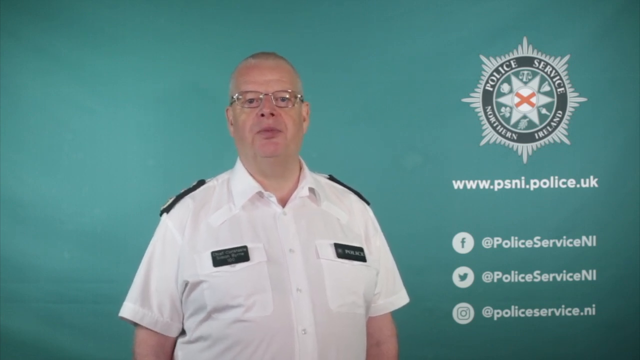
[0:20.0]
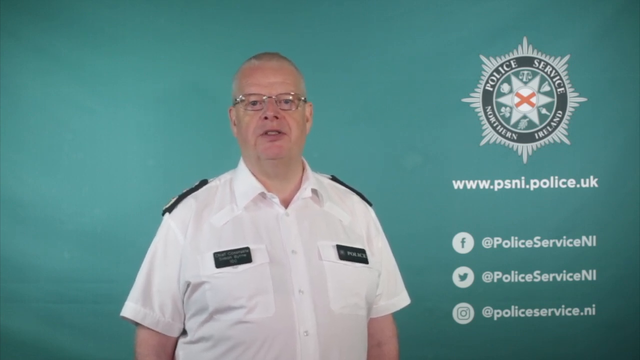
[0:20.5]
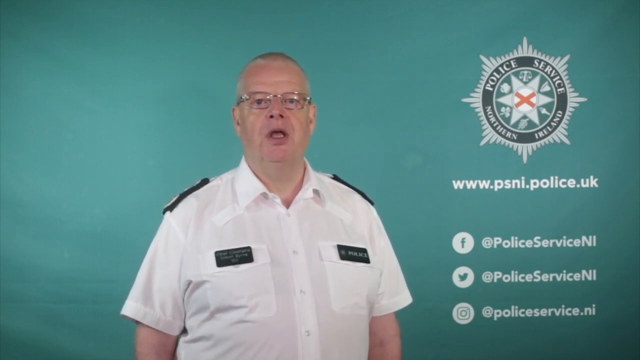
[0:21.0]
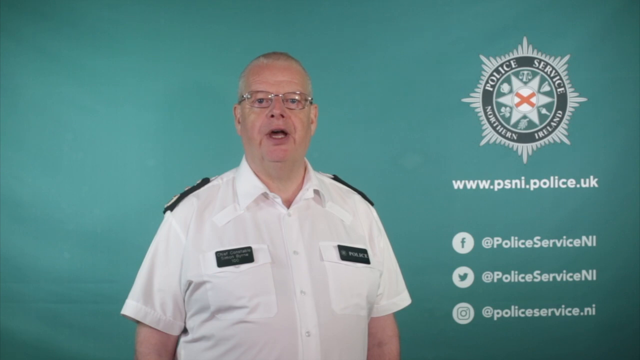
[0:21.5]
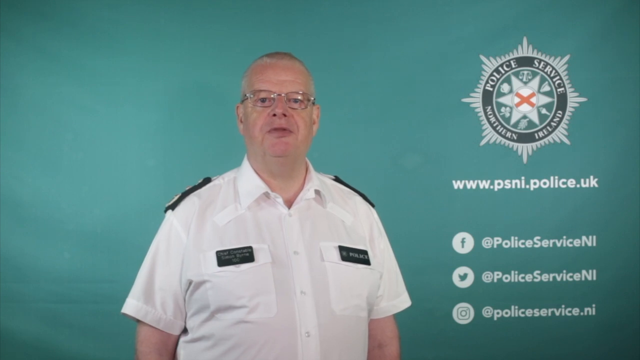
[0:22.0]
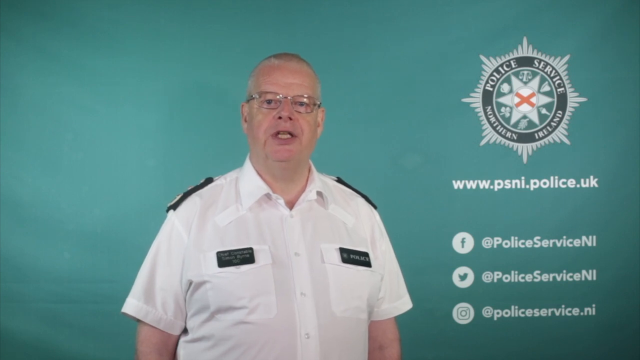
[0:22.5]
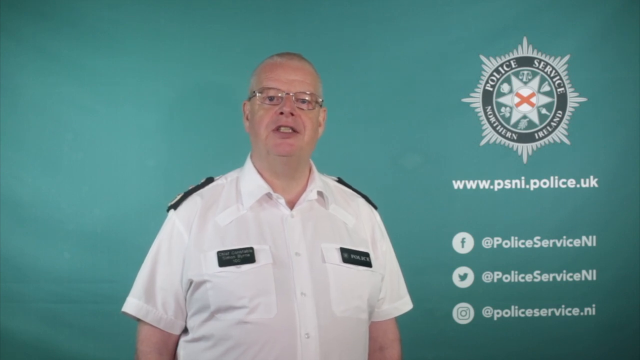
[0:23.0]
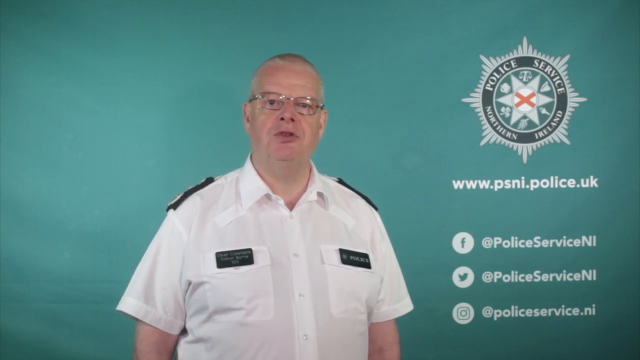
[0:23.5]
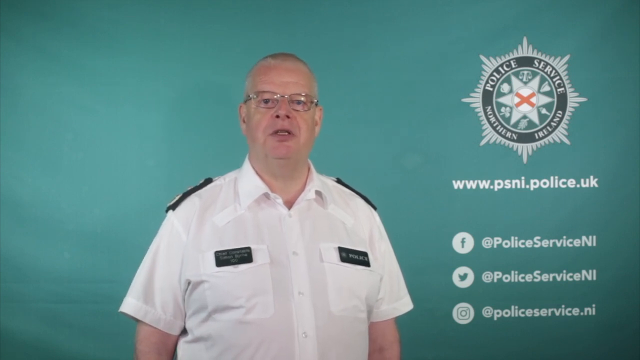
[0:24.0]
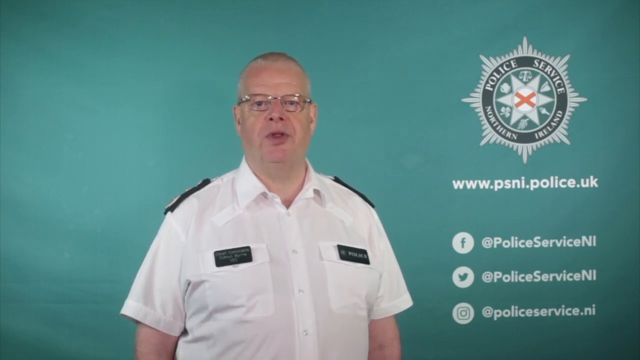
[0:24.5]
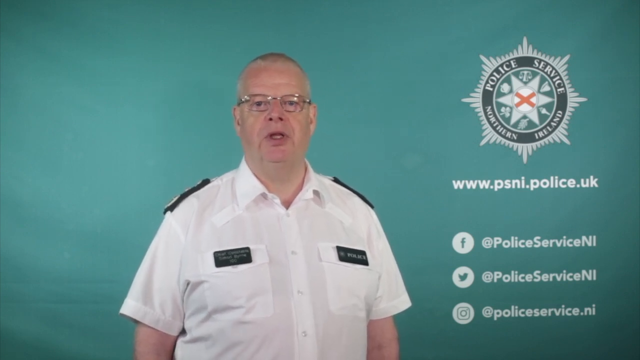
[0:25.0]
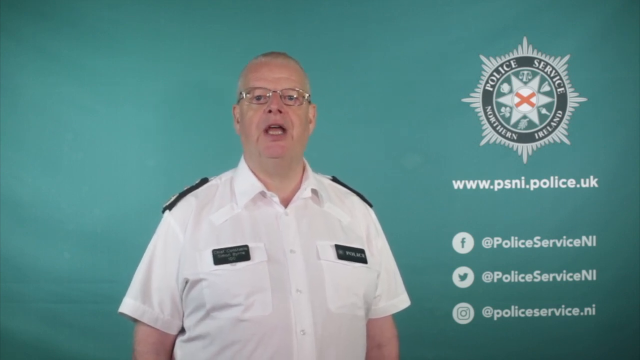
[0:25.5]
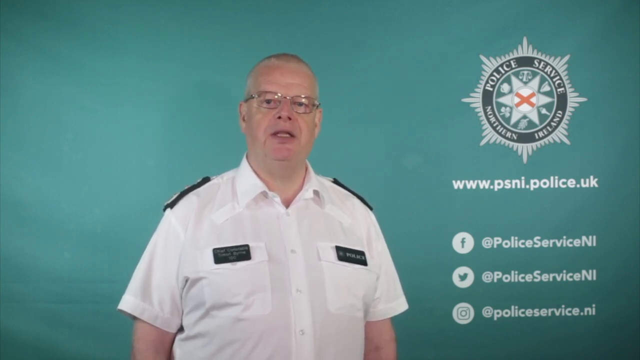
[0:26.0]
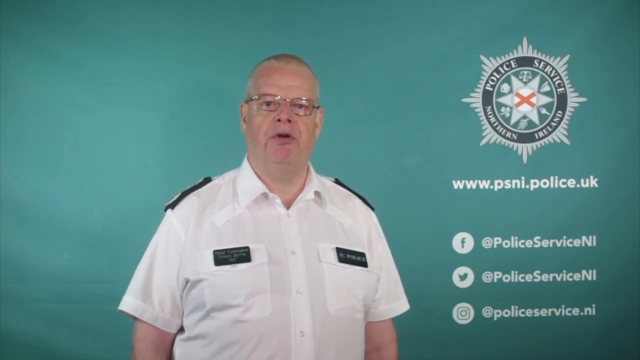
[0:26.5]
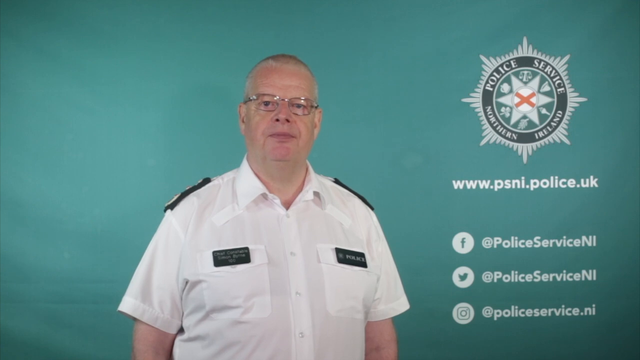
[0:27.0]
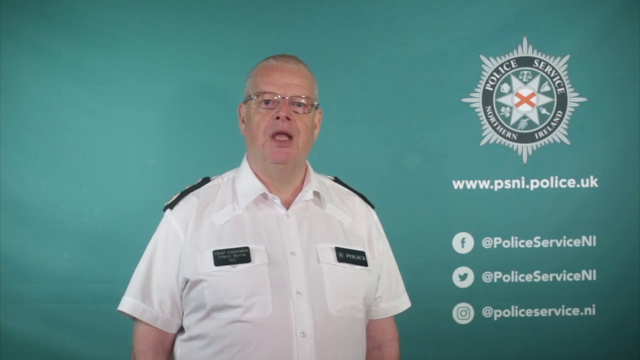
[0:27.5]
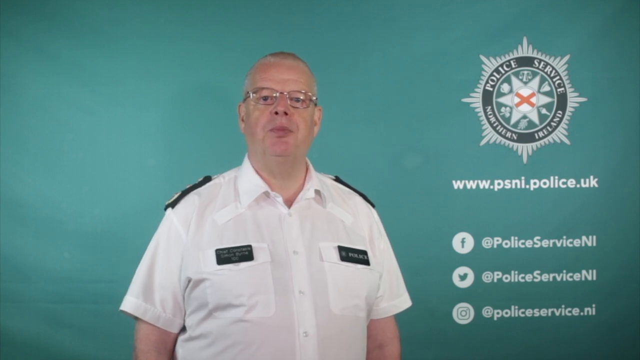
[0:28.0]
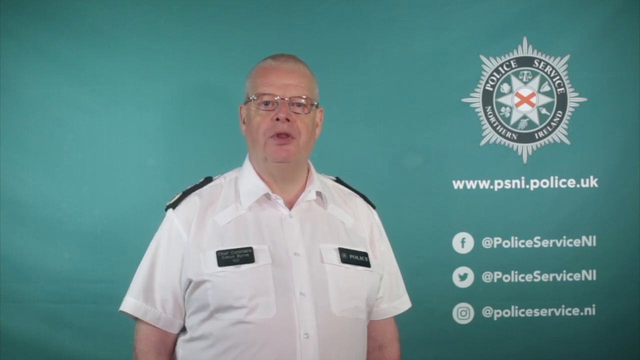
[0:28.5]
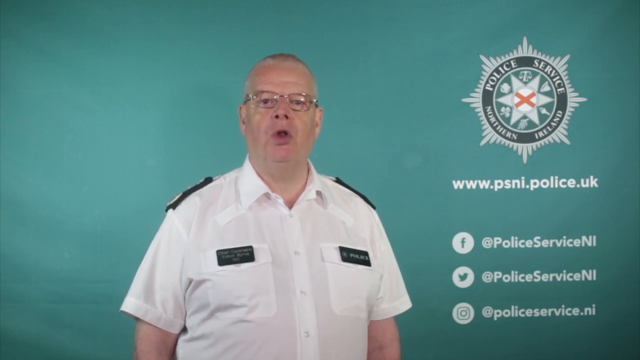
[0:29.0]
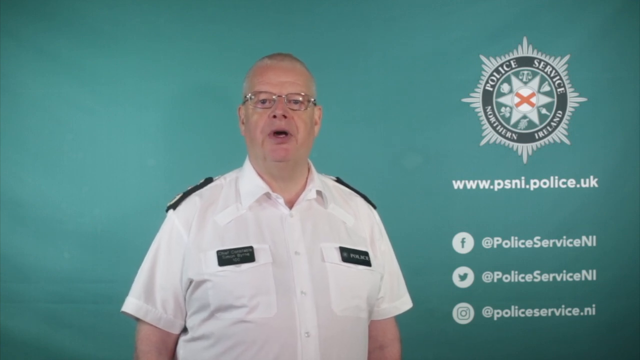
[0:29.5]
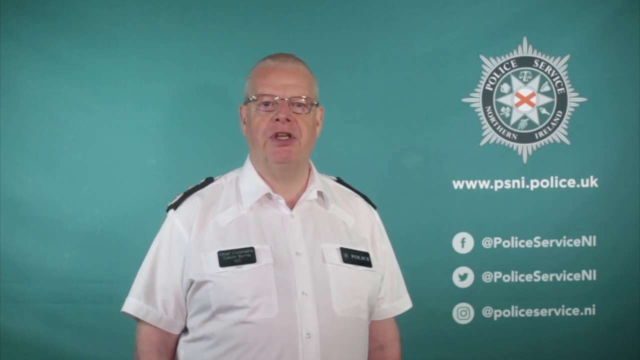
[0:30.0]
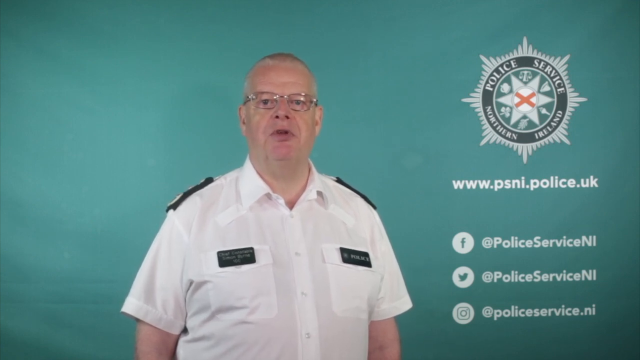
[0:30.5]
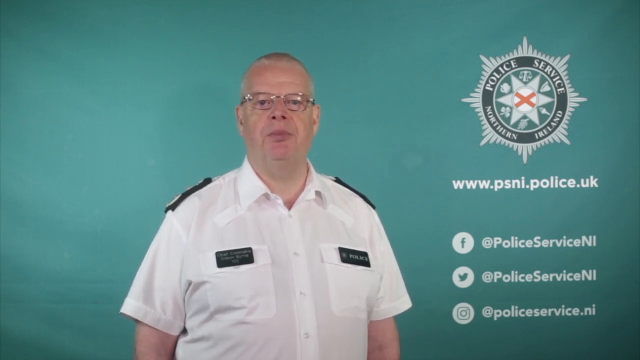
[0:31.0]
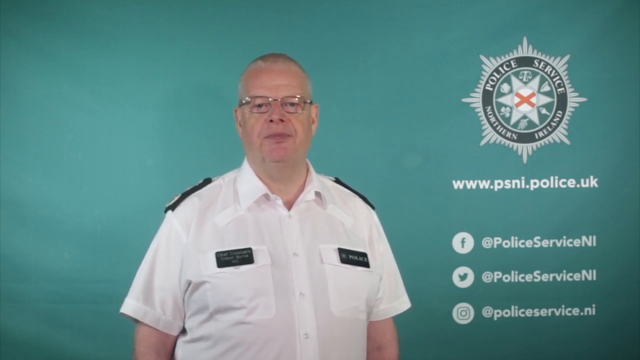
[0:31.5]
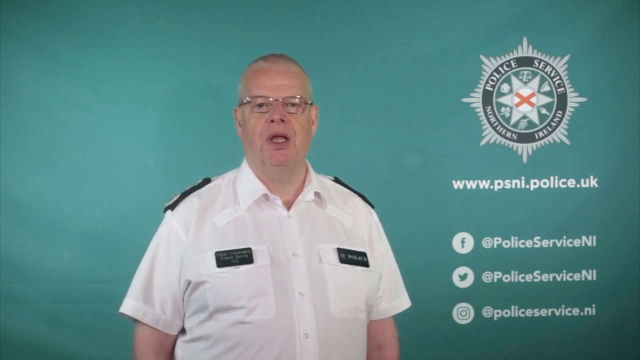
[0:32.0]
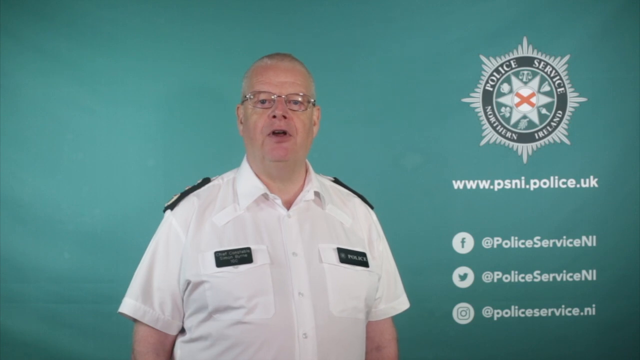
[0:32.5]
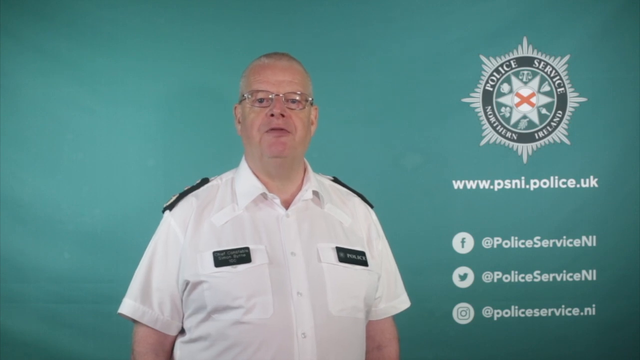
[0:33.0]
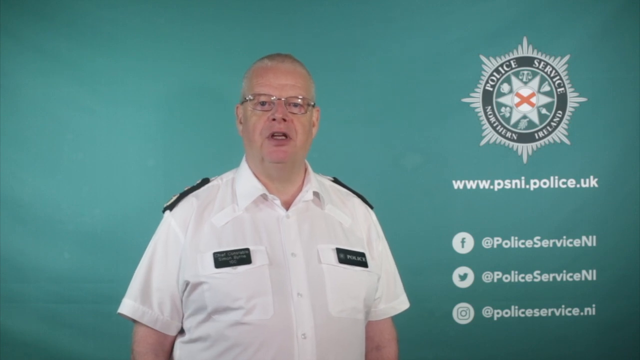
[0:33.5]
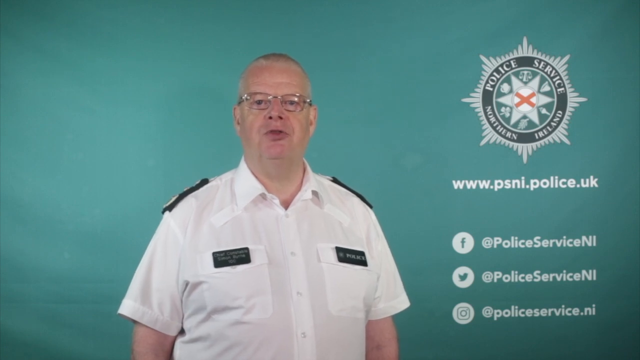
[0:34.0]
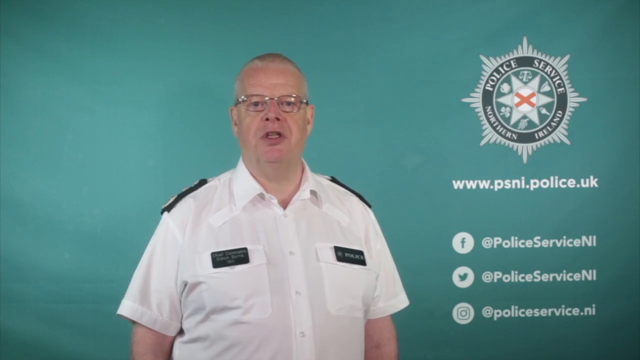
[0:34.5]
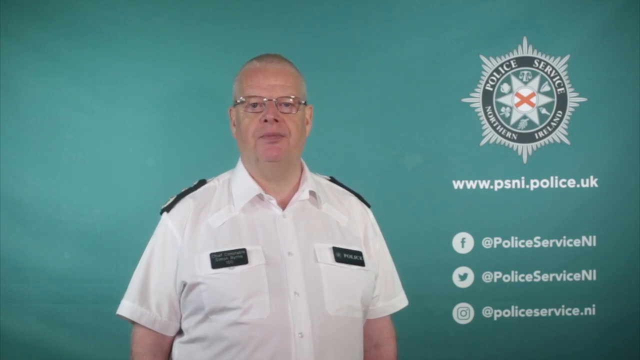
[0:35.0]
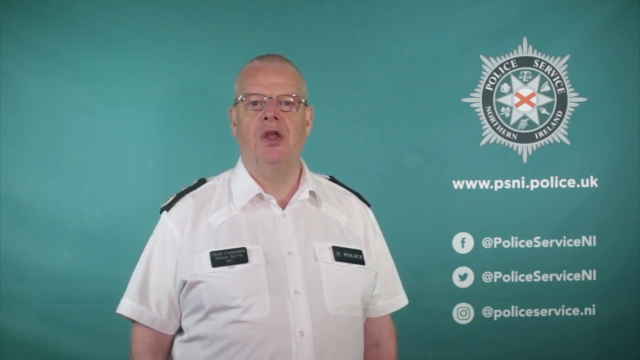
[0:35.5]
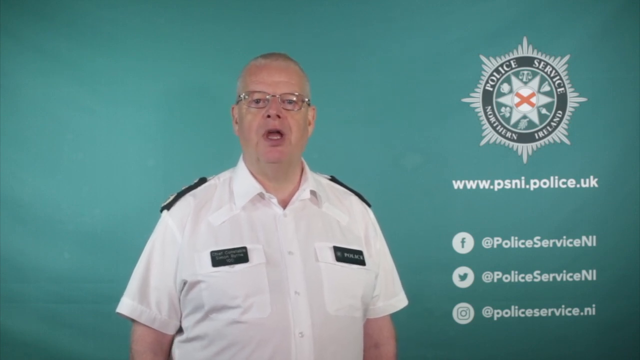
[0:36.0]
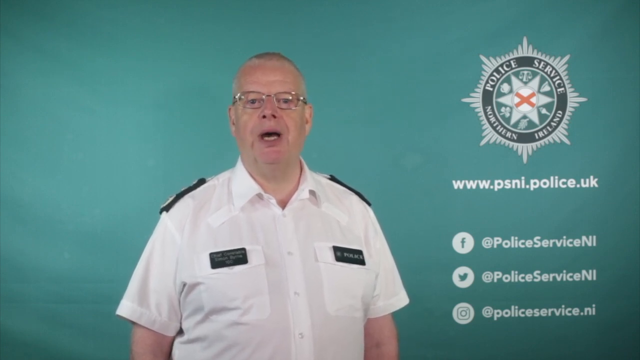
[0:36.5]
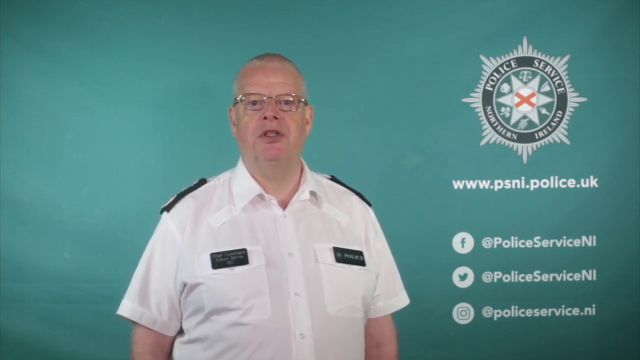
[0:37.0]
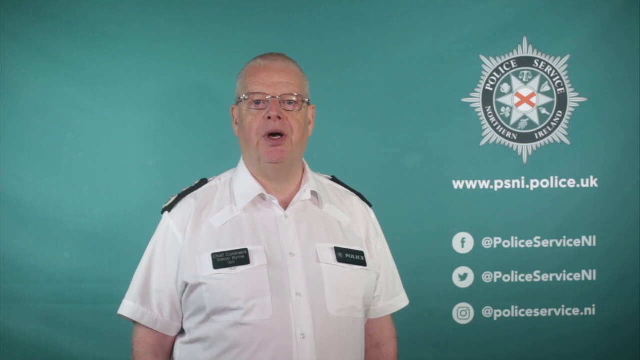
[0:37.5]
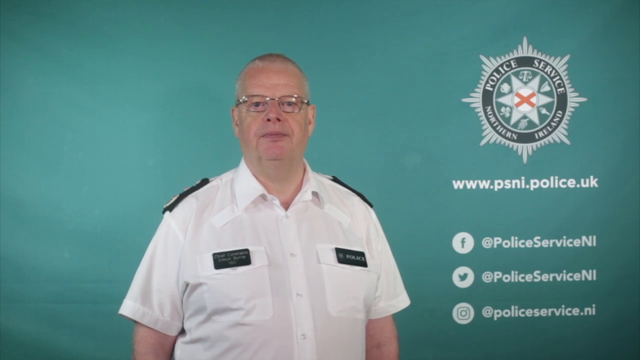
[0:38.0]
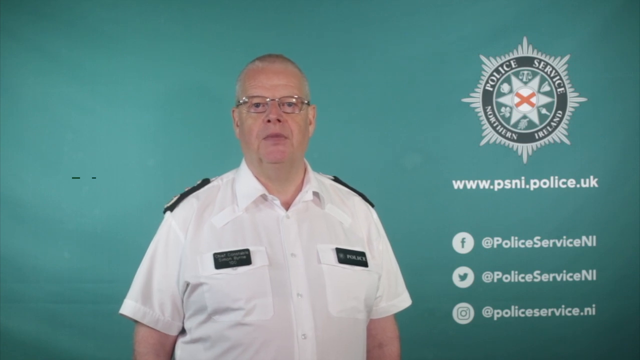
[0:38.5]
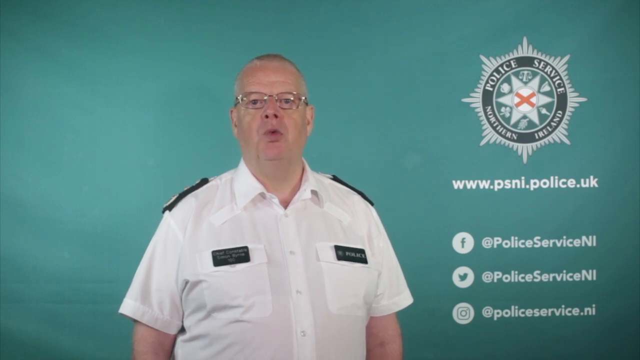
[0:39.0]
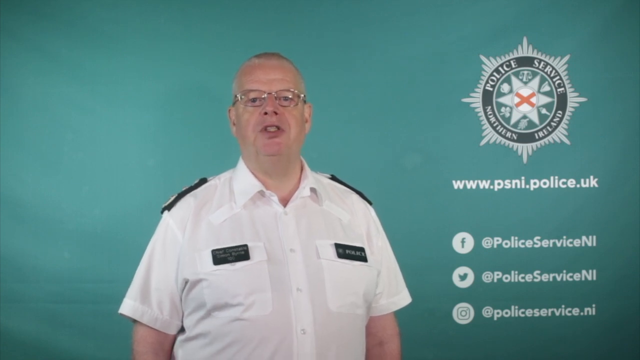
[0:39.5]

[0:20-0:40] The man continues speaking in front of the bluish-green background with very minimal body movement. He has a rather stern and disappointed look on his face and seems to be delivering an important message. The Police Service of Northern Ireland insignia sits in the top right corner, and the social media handles for Facebook, Twitter and Instagram are on the right-hand side in the lower corner, all reading "PoliceServiceNI". He has what appears to be a name tag on the left side of his chest and another tag on the right side whose words cannot be read. He wears glasses, has very little hair, has what appear to be patches on his shoulders, and wears a white collared shirt.